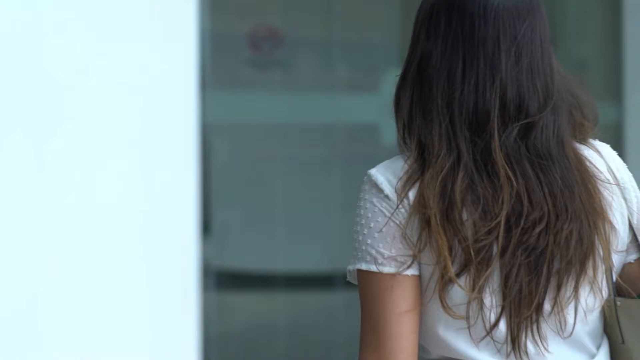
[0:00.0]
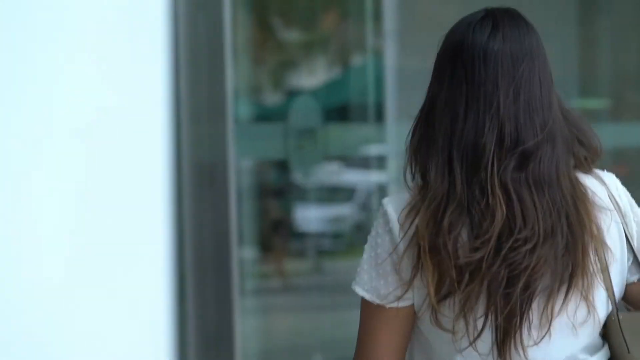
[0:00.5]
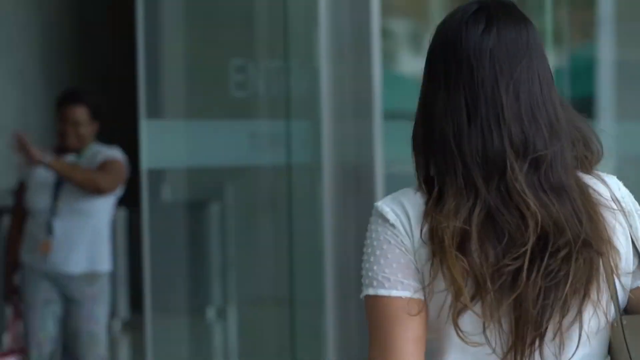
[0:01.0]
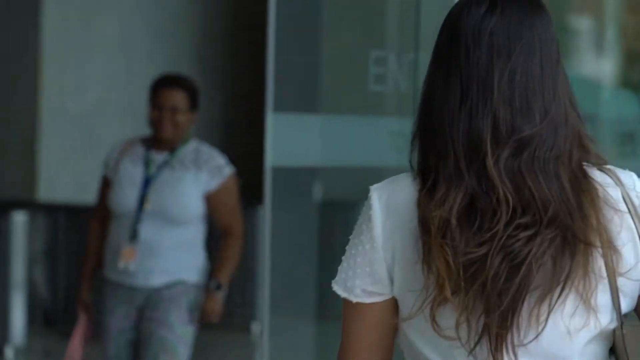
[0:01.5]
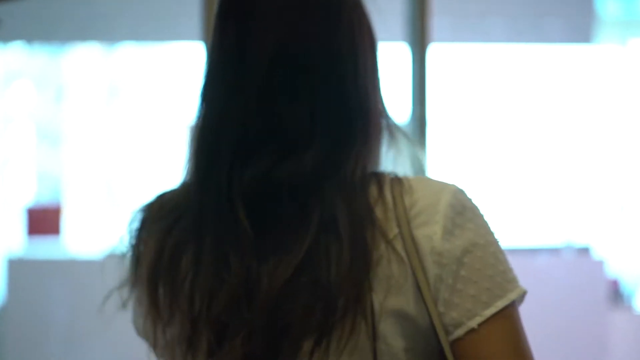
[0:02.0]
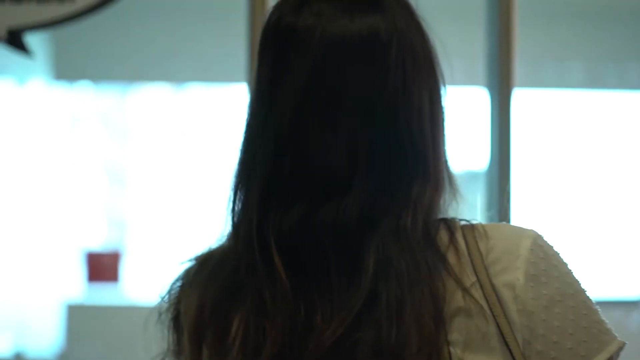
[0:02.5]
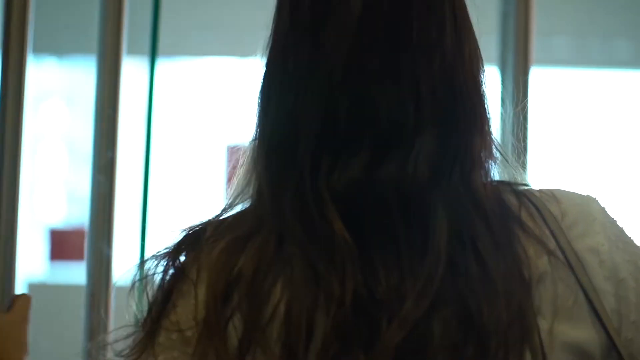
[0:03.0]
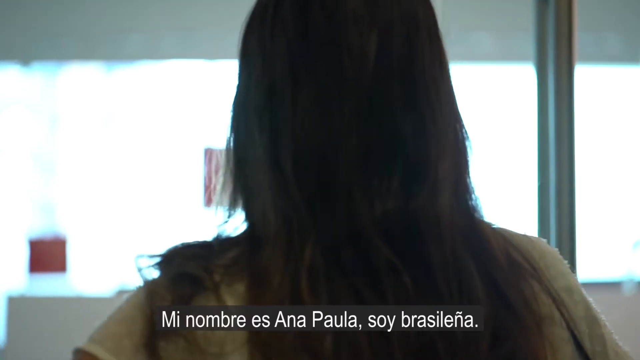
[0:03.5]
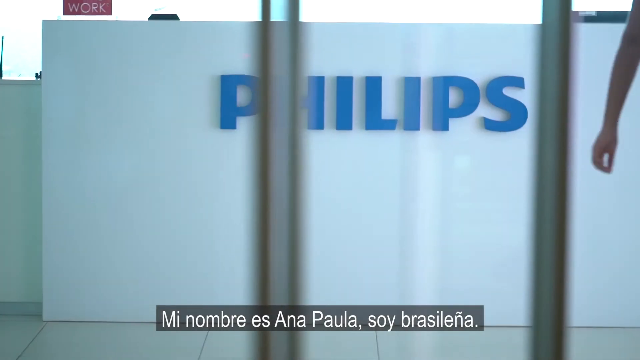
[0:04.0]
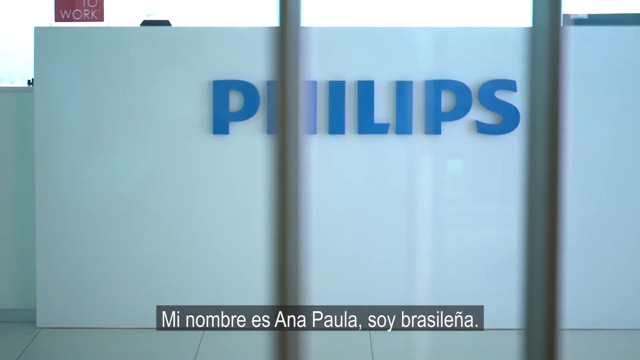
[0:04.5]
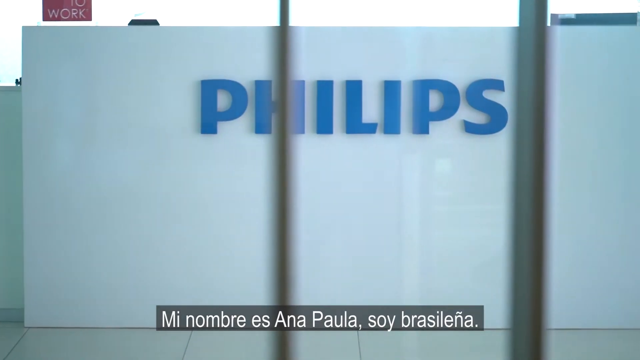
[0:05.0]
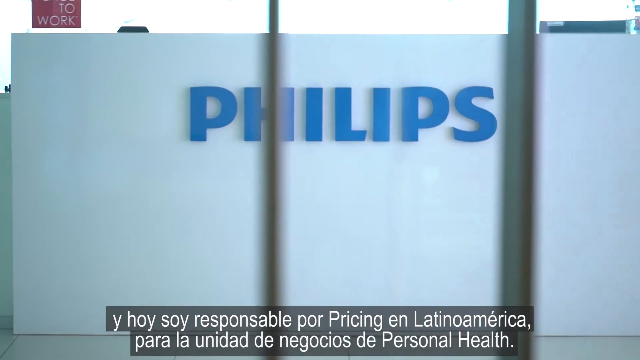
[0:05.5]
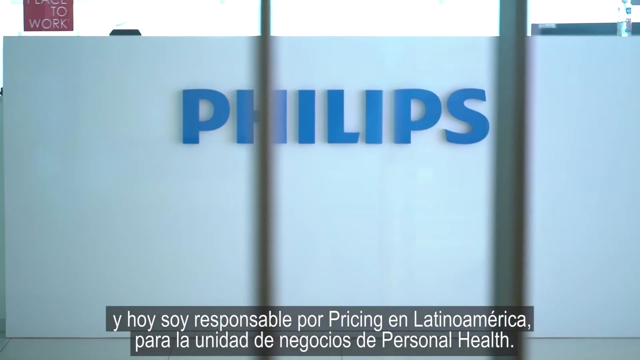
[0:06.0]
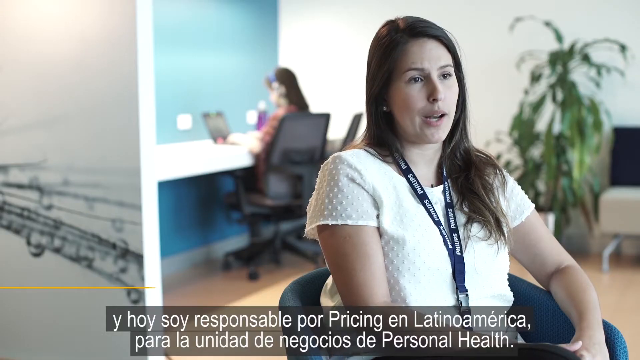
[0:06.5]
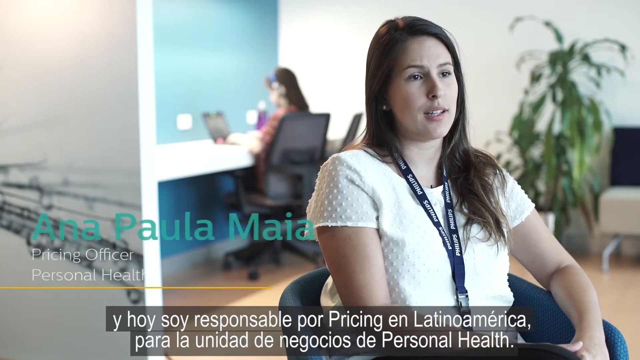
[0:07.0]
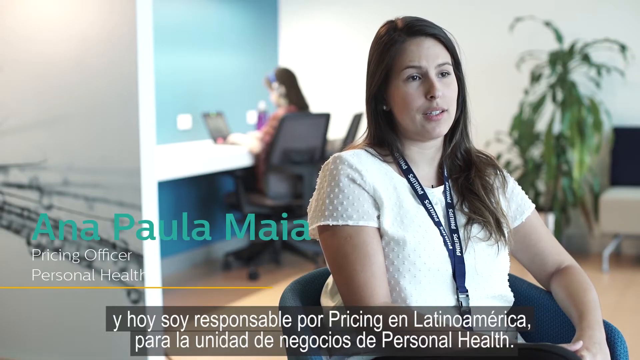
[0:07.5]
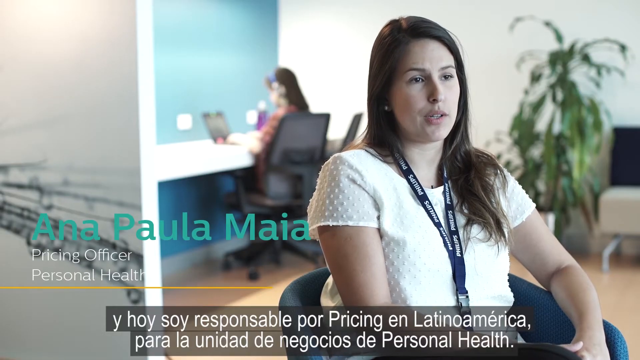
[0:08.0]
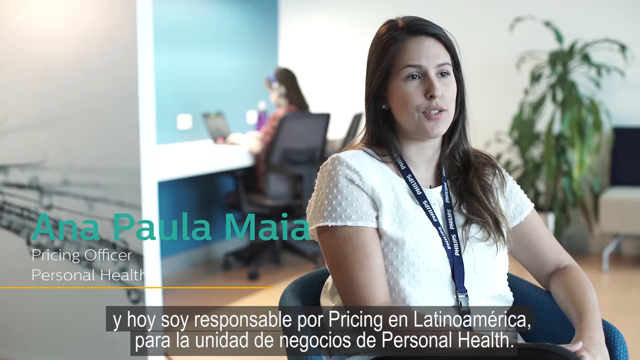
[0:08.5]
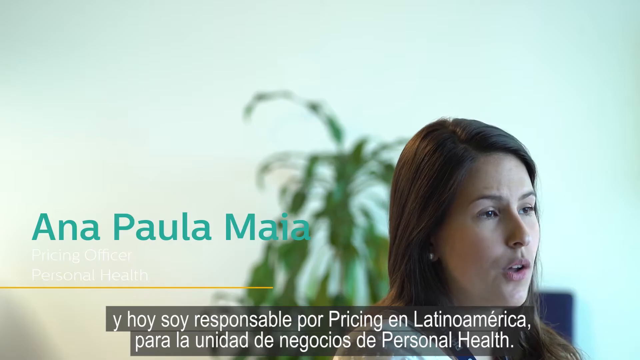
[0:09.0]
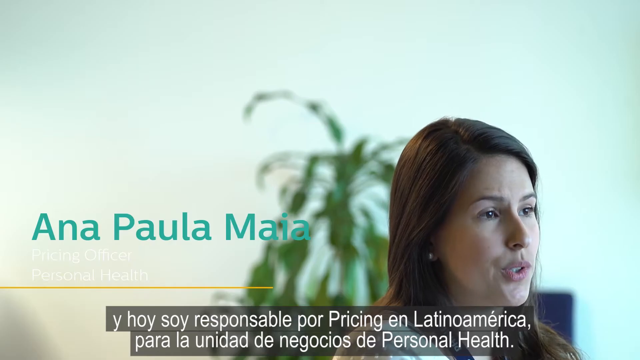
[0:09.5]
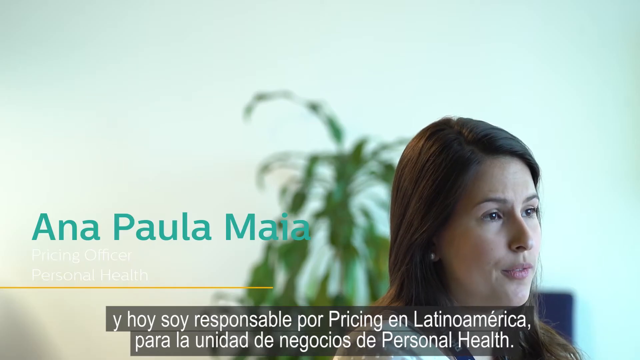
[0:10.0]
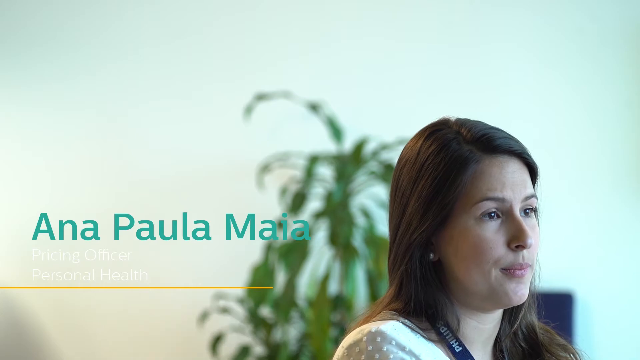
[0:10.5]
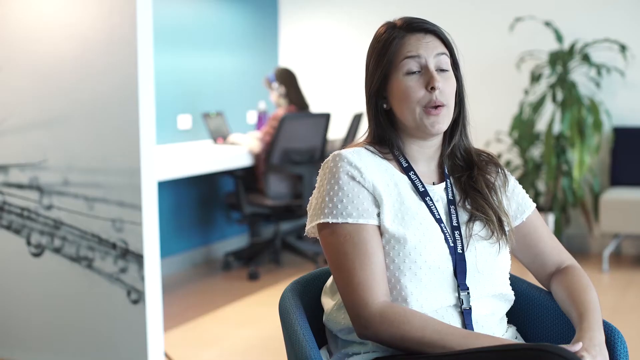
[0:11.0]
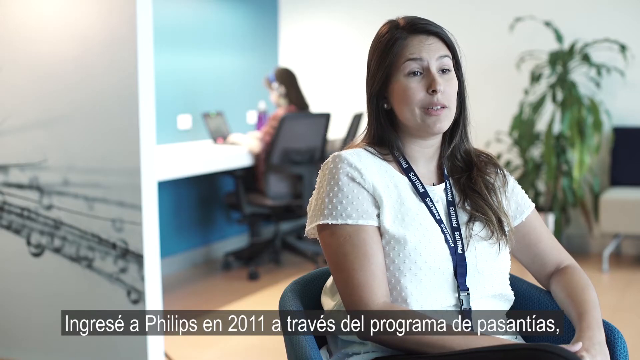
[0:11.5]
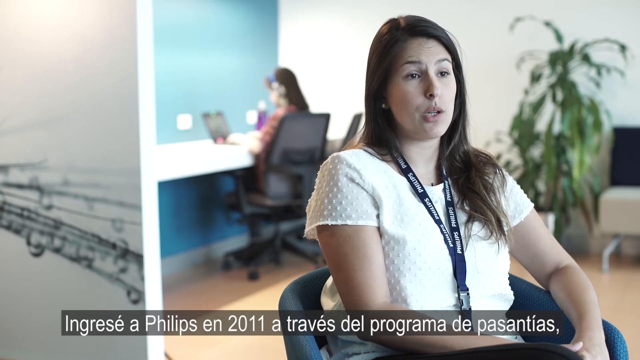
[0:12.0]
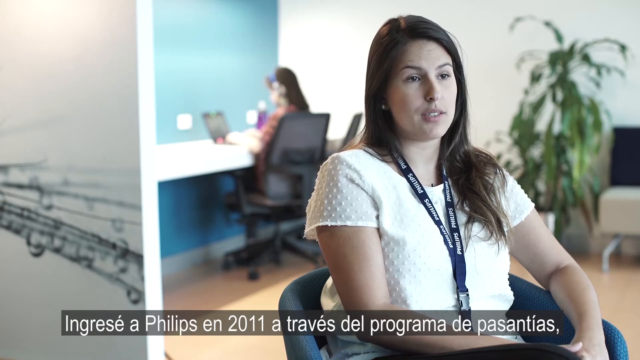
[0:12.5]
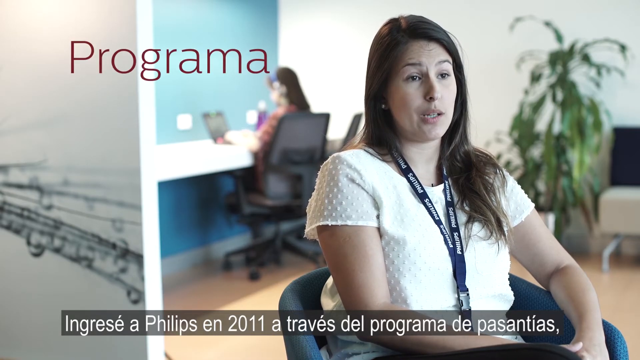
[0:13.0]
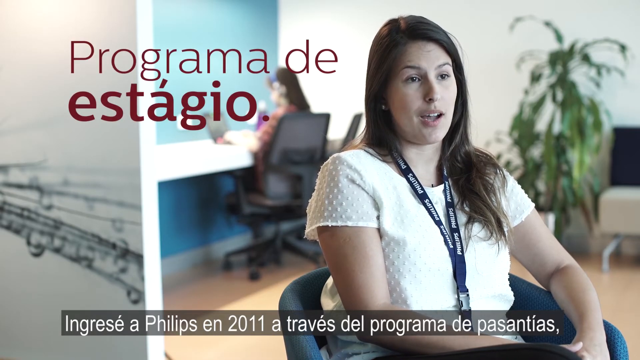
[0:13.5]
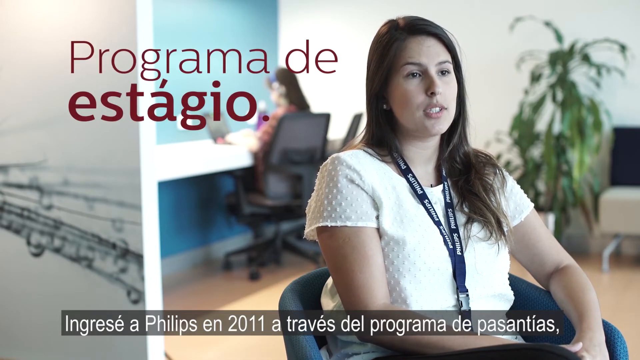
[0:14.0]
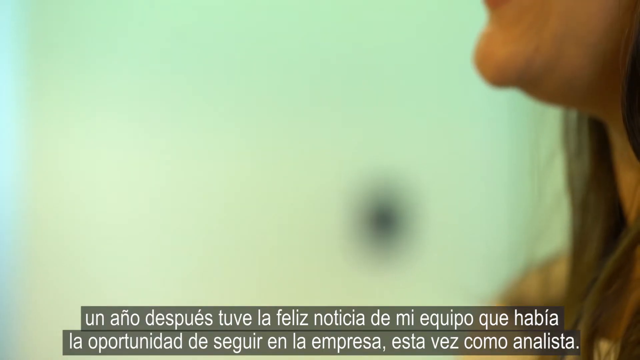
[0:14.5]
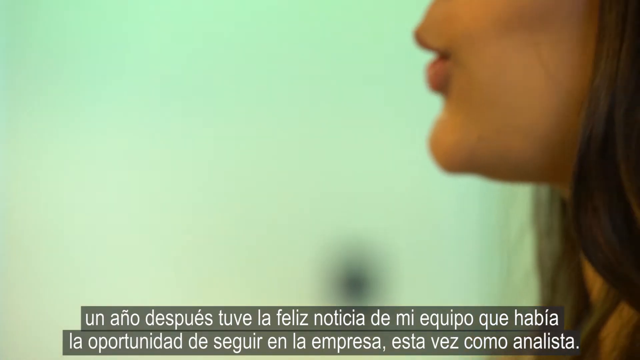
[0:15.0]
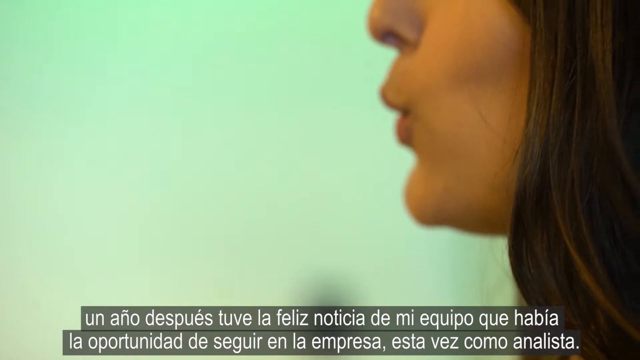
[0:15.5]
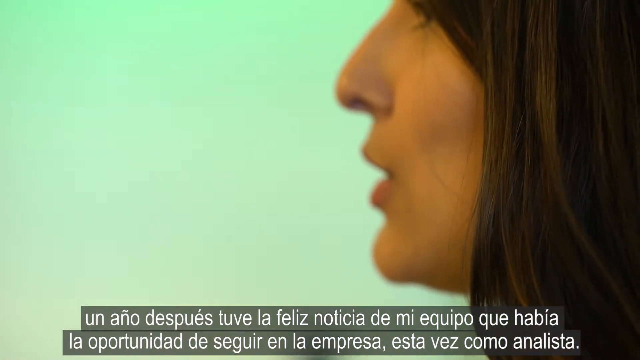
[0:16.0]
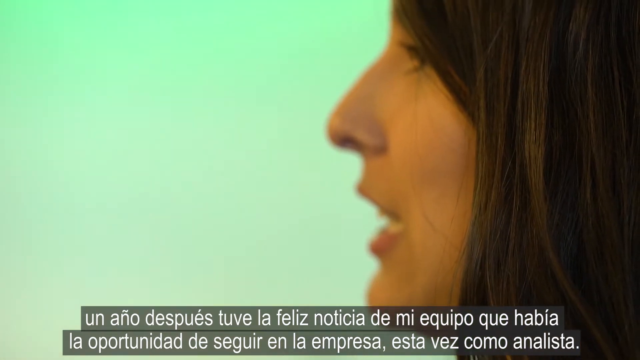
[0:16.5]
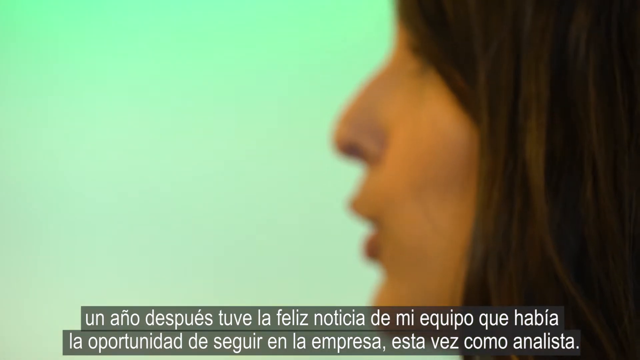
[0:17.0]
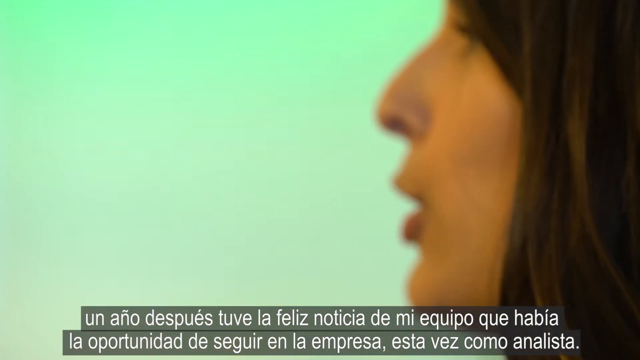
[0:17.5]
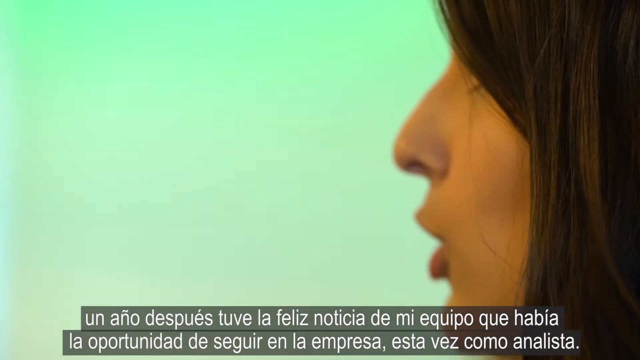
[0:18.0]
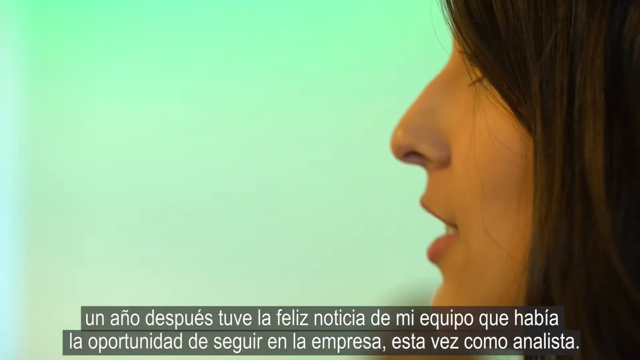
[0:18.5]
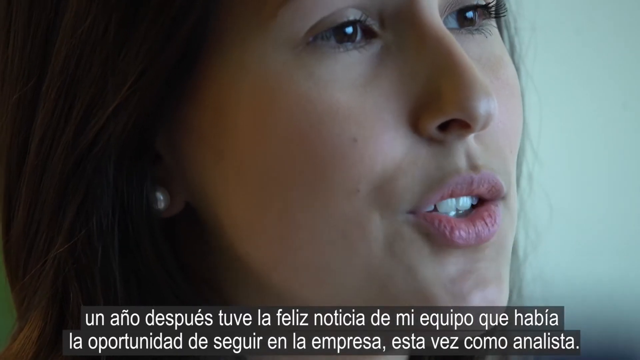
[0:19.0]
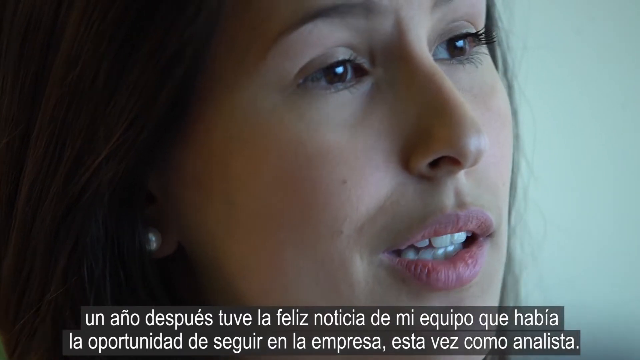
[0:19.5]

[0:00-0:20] The video begins with a shot from behind a woman with long dark hair wearing a white blouse. The camera follows her as she walks toward glass doors, and a Black woman wearing a white blouse, grey pants, and a badge around her neck approaches. The shot changes to follow behind the woman inside the building as she walks through a set of doors, past a sign written in blue and a white wall that says "Philips". The view then switches to the front of the woman the camera has been following. She wears a white blouse and a blue Philips lanyard around her neck with a badge attached. Behind her are white walls, a blue wall, and a woman sitting in an office chair working on a laptop at a white countertop. There is a green plant behind her and to her right. Her name, "Anna Paula Maia", appears on the bottom left of the screen; she is the pricing officer, personal health. Anna speaks as the camera positions itself to the left of her face, then directly in front of her again. She speaks in another language. The camera zooms in to a close-up of Anna's face: she has brown eyes, a long thin nose, flat pink lips, straight white teeth, and two small moles on her right cheek. She wears a large pearl earring in her right ear.